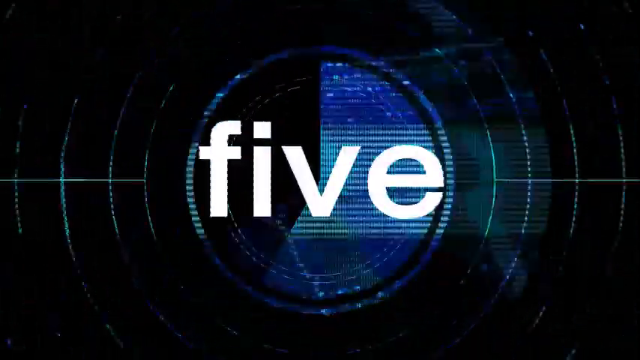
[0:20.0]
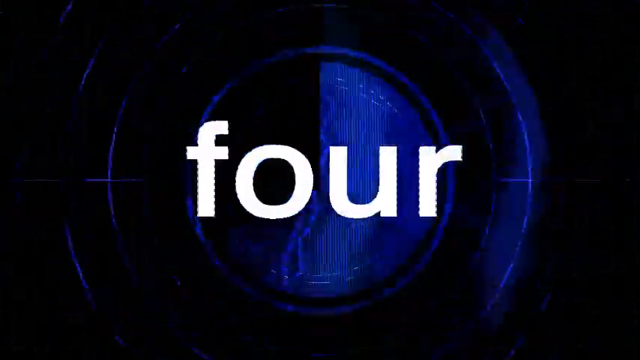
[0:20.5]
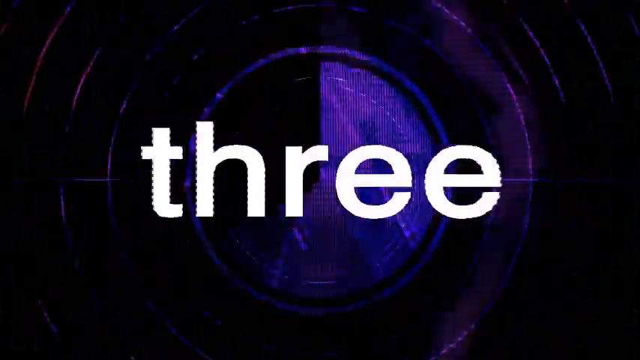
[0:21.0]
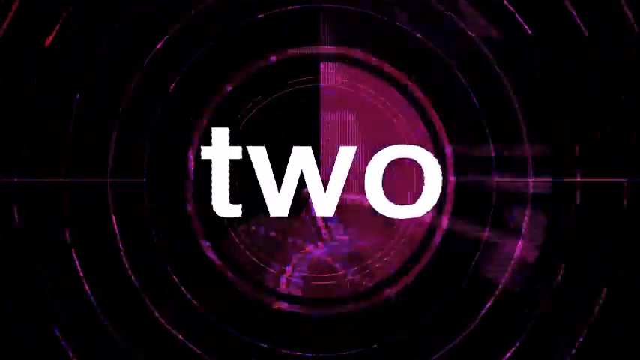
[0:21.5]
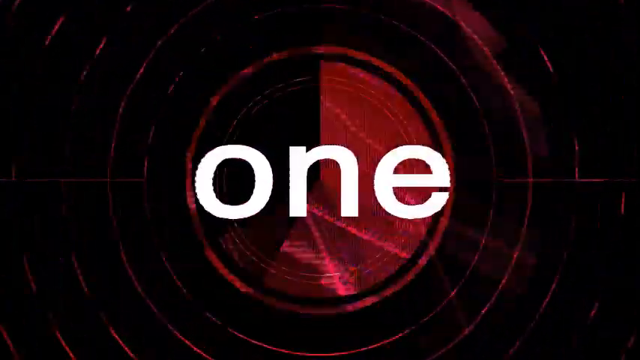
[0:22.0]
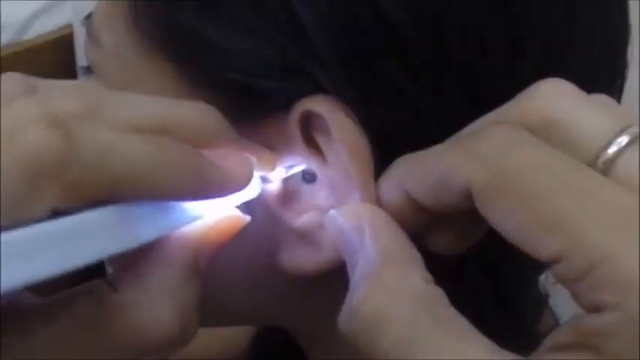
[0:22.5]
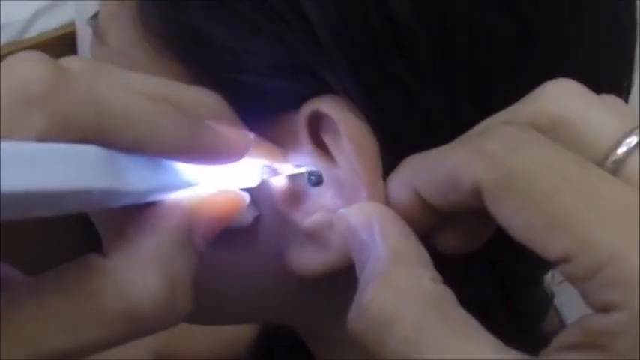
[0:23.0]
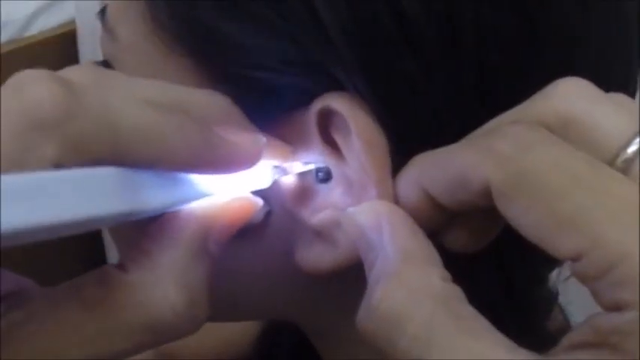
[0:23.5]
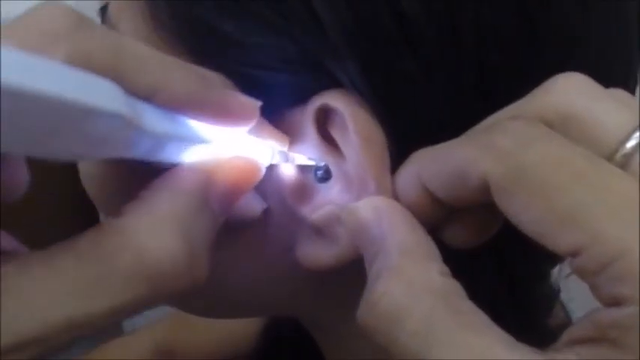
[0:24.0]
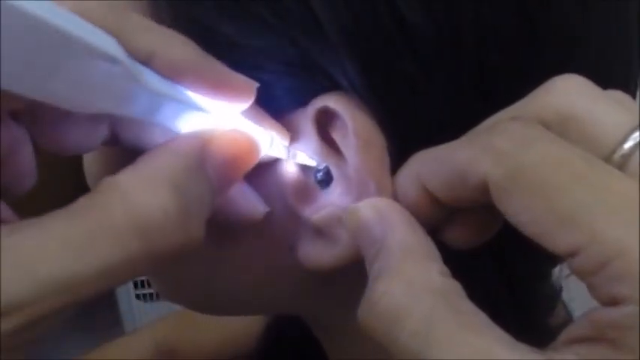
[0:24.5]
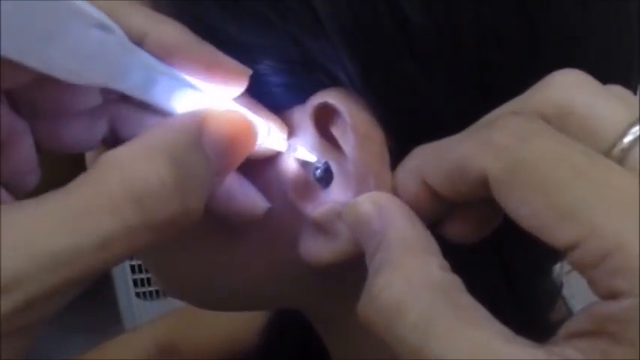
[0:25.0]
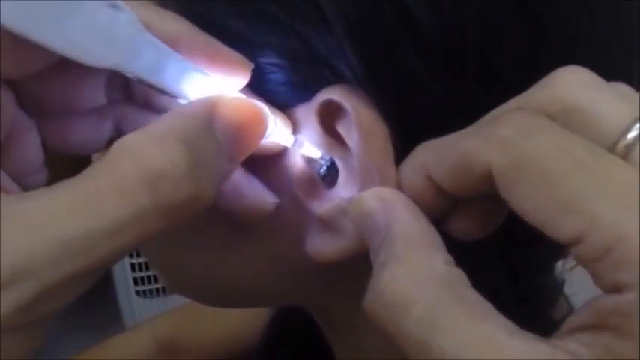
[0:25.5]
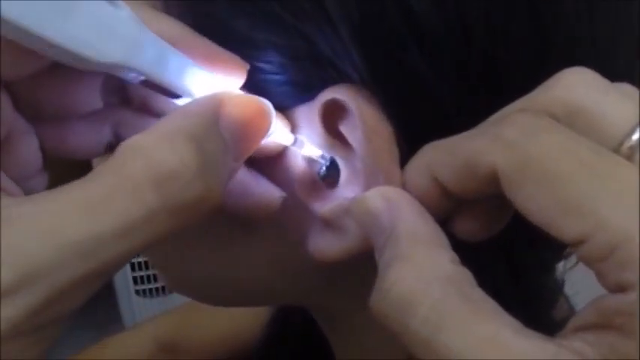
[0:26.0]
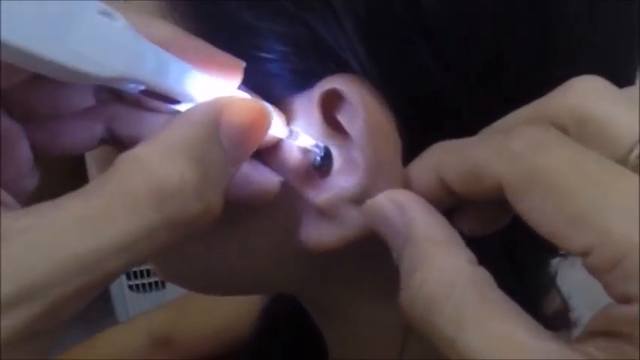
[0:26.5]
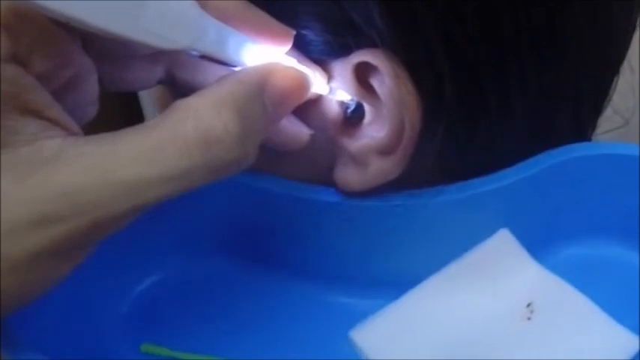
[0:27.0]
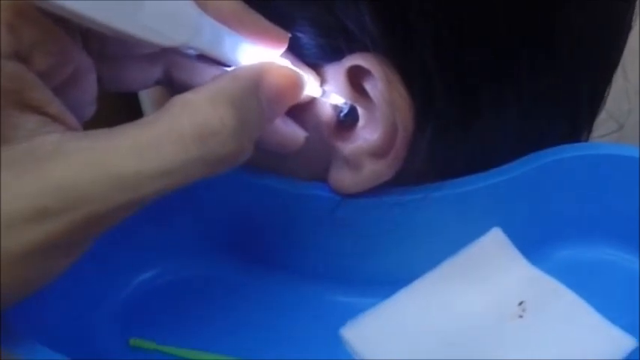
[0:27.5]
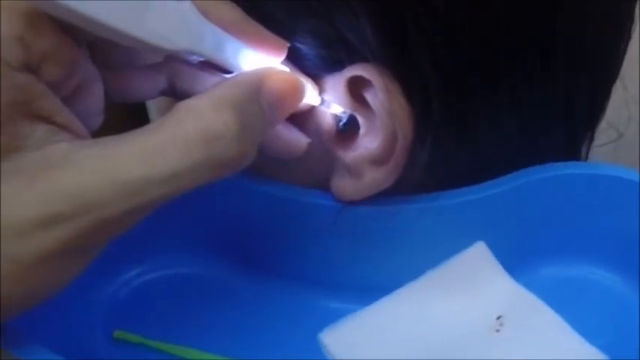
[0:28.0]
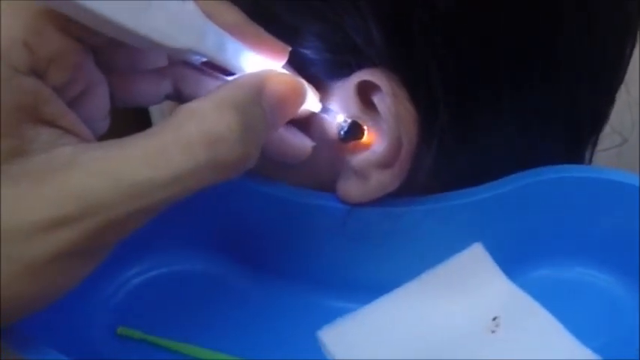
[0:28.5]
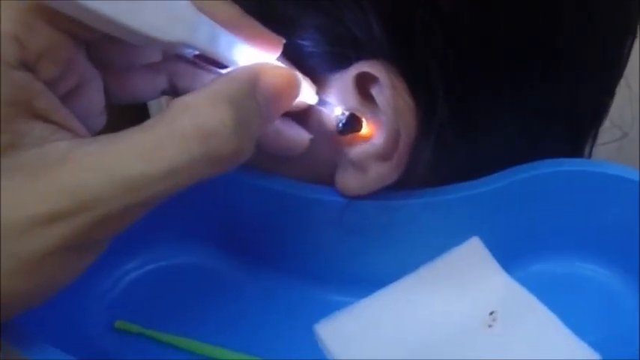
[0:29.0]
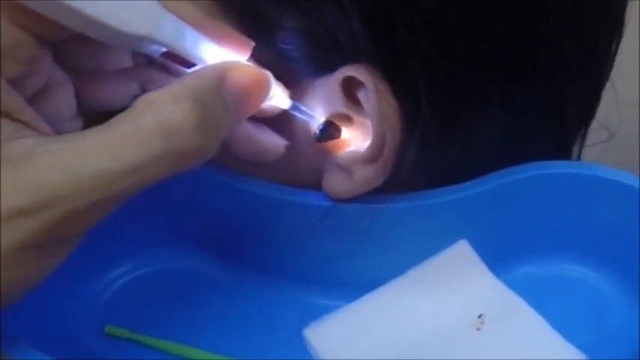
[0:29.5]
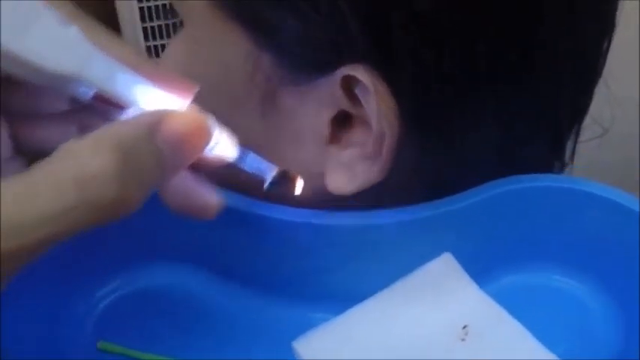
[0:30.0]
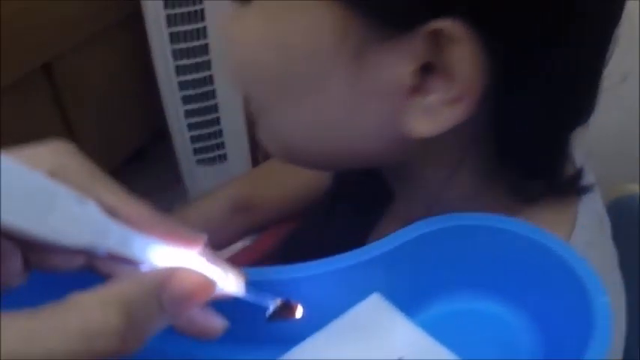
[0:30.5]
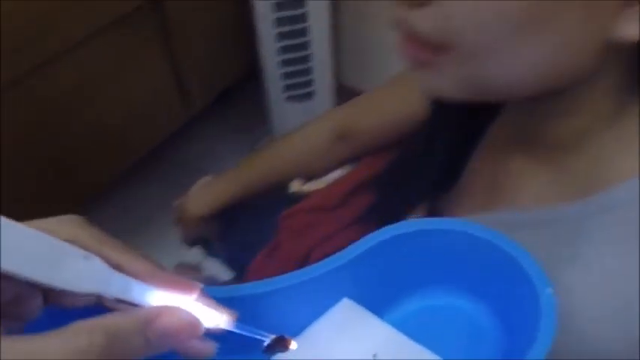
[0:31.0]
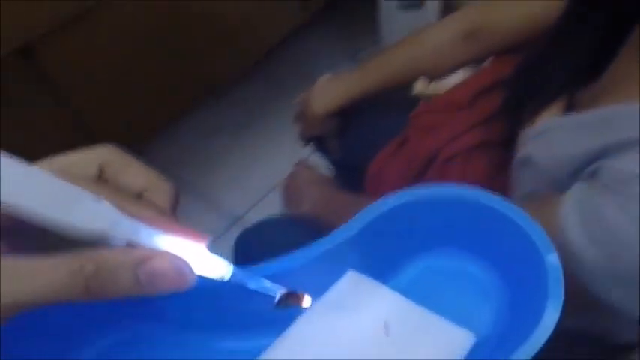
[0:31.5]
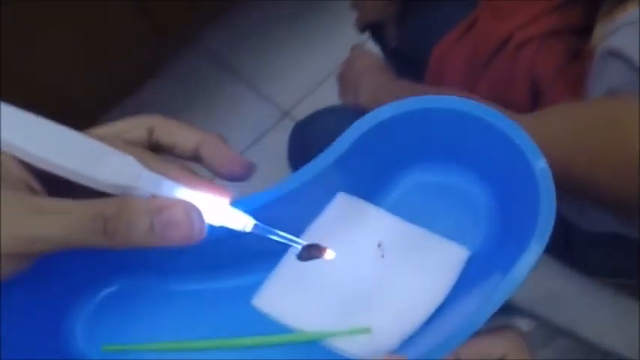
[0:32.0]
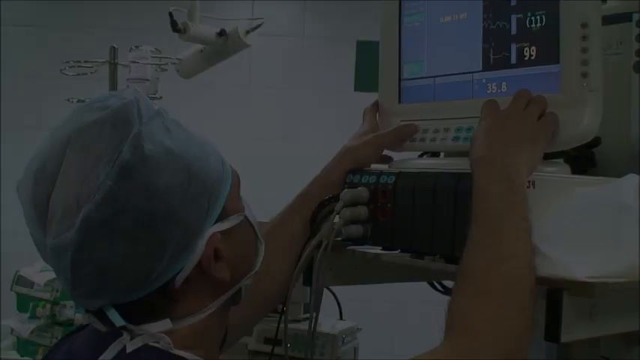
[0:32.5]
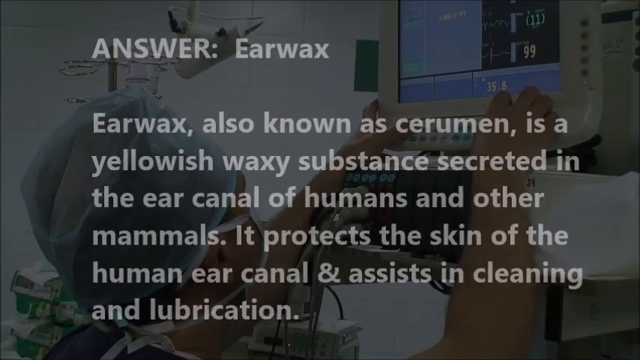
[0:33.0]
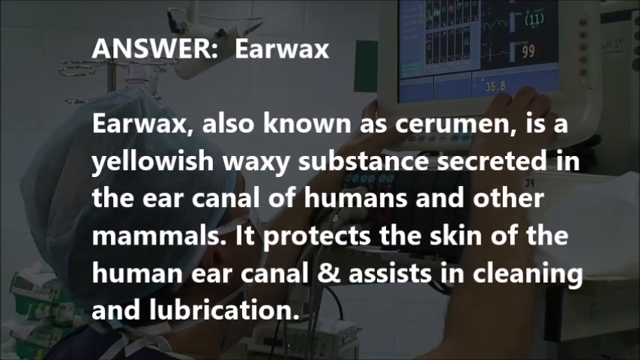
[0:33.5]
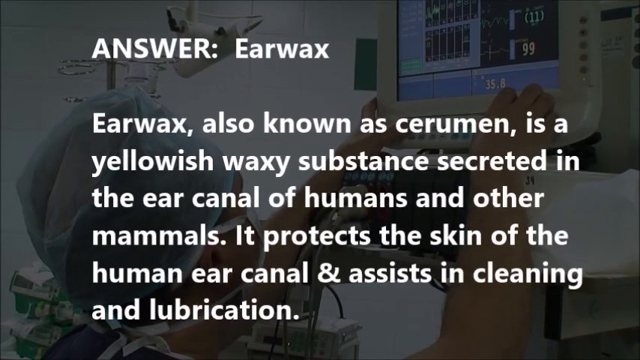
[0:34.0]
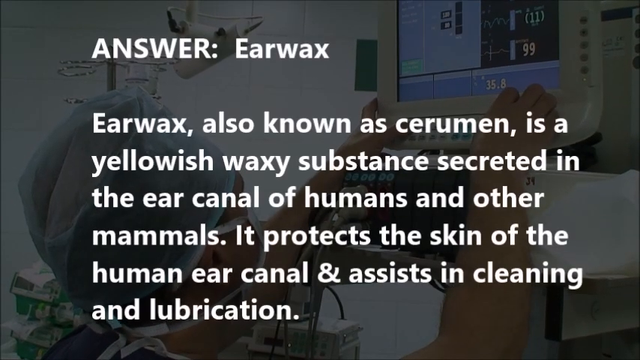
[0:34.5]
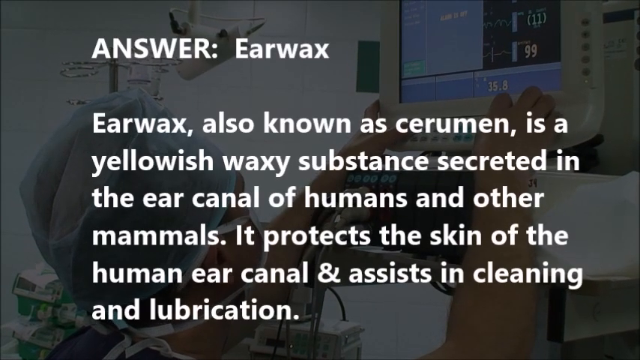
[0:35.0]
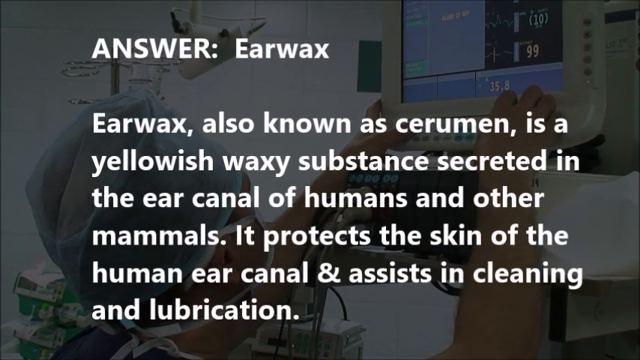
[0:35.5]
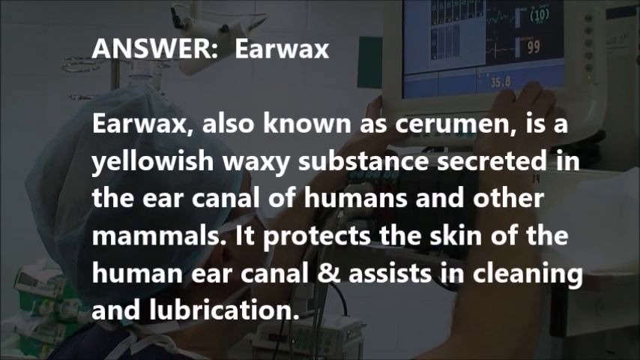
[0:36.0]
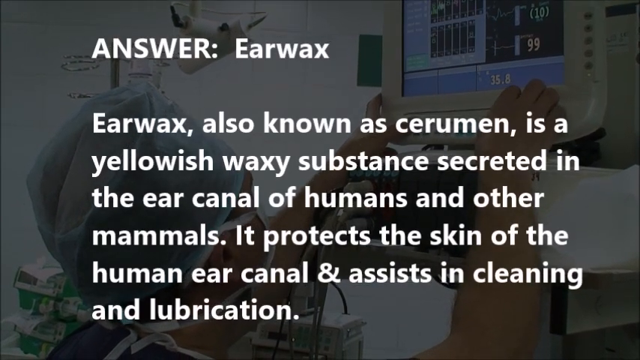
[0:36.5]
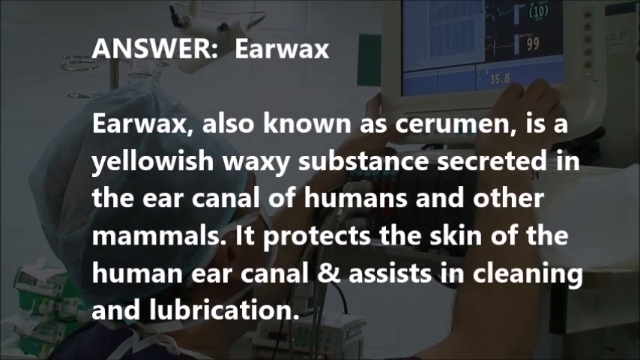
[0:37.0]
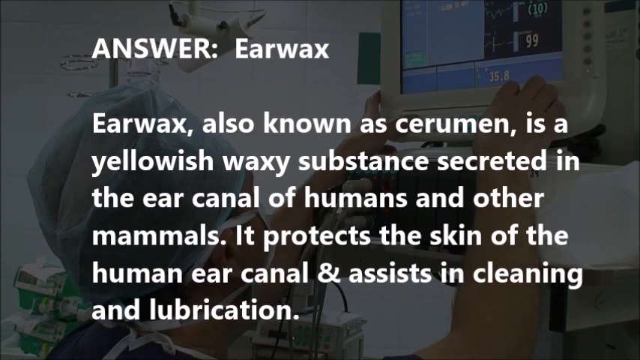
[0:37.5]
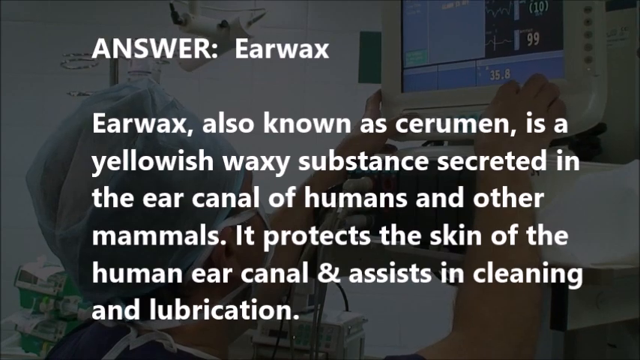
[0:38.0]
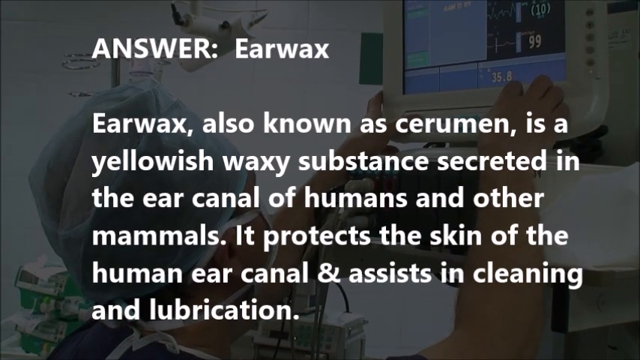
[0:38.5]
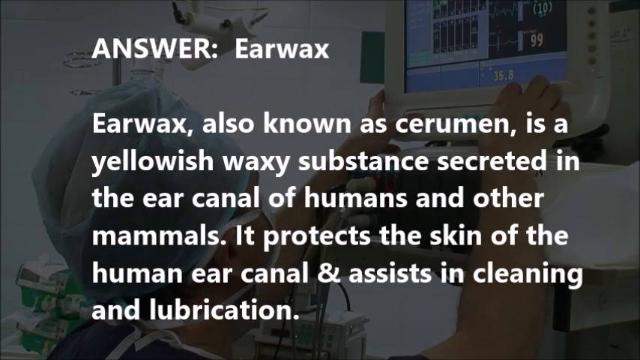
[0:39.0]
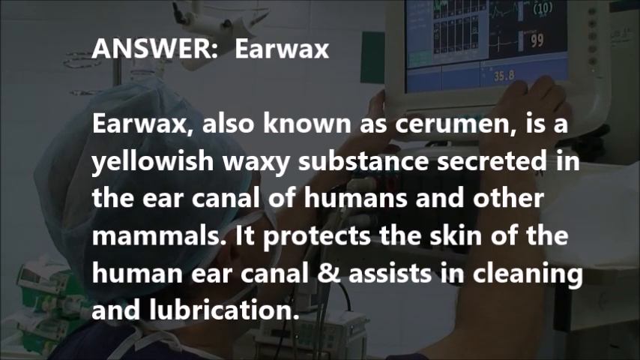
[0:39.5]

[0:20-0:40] The countdown graphic continues on a black background, counting down 4, 3, 2, 1 with circles of different colours. Then a close-up shows a person's ear with a black raised circle in its centre. A doctor with gloved hands looks at the black circle. In her left hand she holds a tool with a light and a sharp point, and with her right hand she holds the ear stable. She uses a levering motion with the tool at the top of the lump to ease the black object out of the ear, and slowly the object pokes out. With the object at the end of the lighted tool, she drops it into a blue plastic kidney dish onto a white tissue. The screen then changes to the title "Answer Earwax" with the text "earwax, also known as cerumen, is a yellowish waxy substance secreted in the ear canal of humans and other mammals. It protects the skin of the human ear canal and assists in cleaning and lubrication." Behind this text, a doctor in a surgical mask and hat in an operating theatre reaches up to a monitor and changes its screen, which shows changing boxes, possibly x-rays, and numbers on the right.